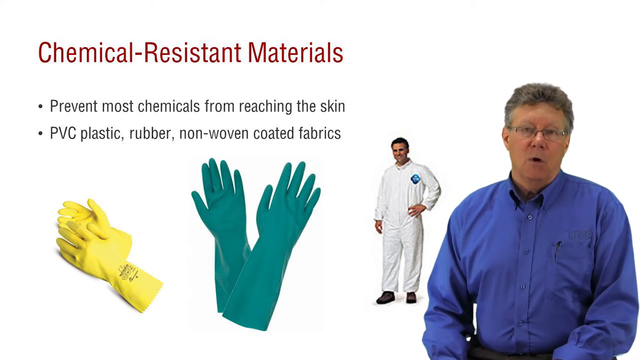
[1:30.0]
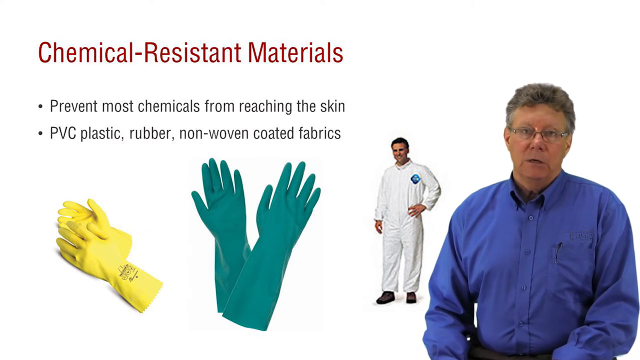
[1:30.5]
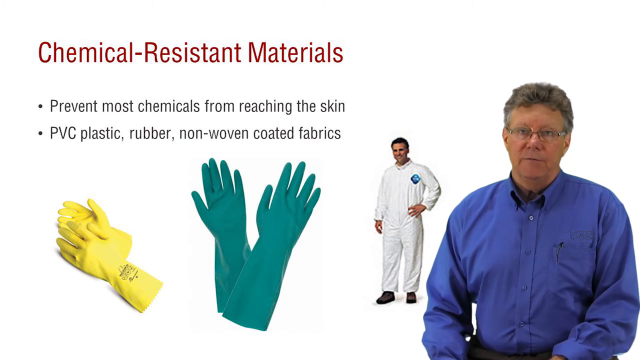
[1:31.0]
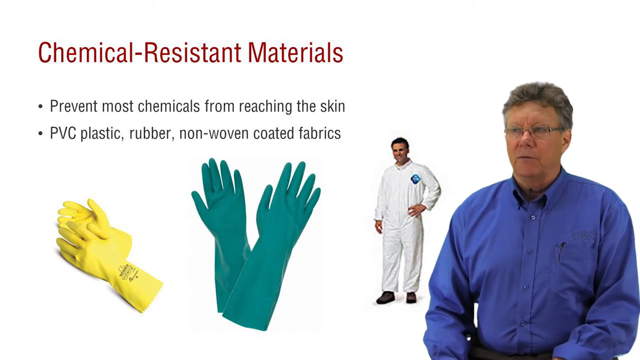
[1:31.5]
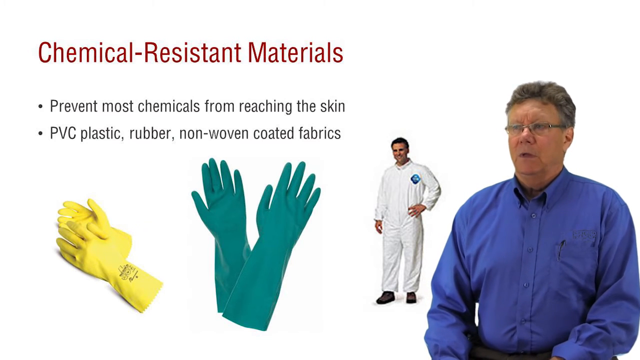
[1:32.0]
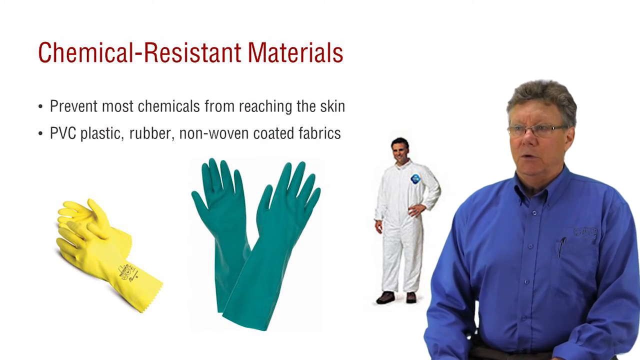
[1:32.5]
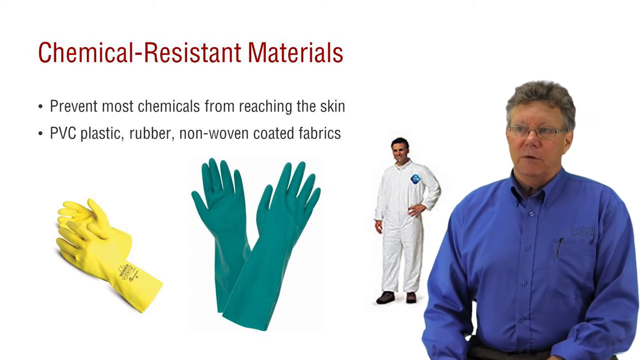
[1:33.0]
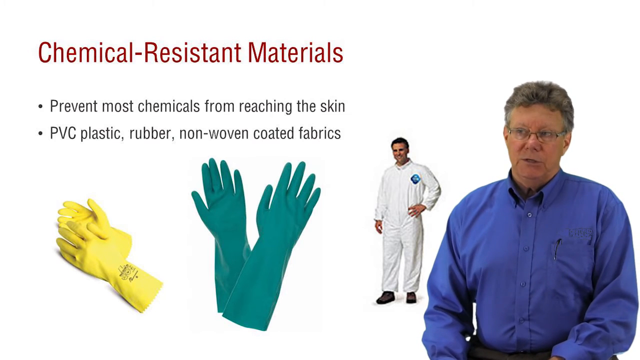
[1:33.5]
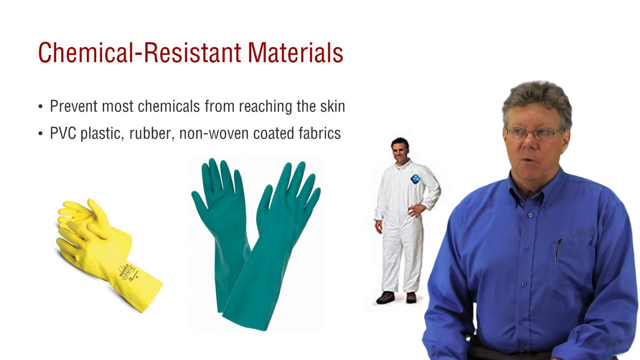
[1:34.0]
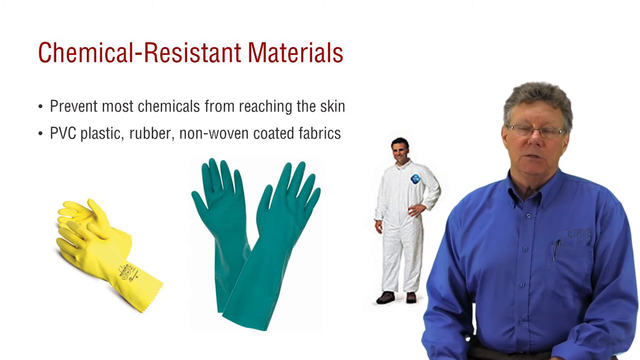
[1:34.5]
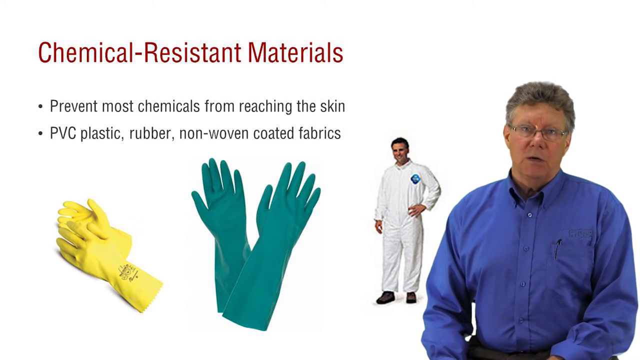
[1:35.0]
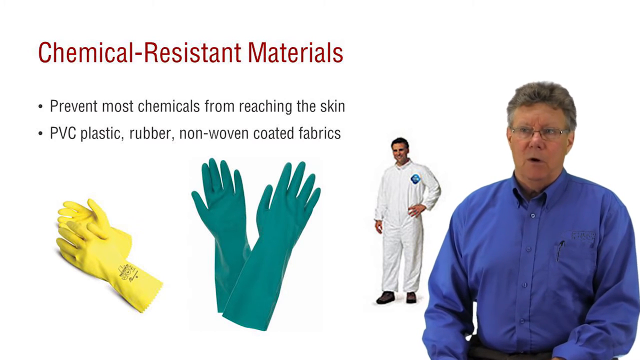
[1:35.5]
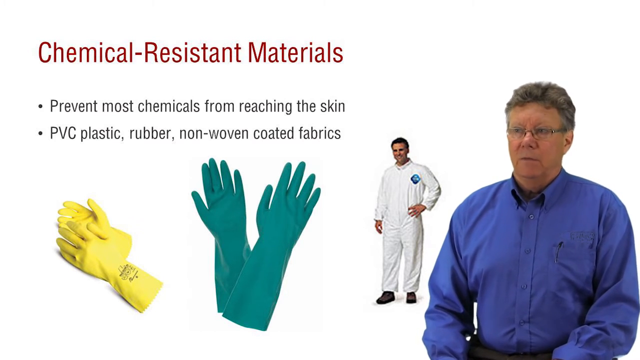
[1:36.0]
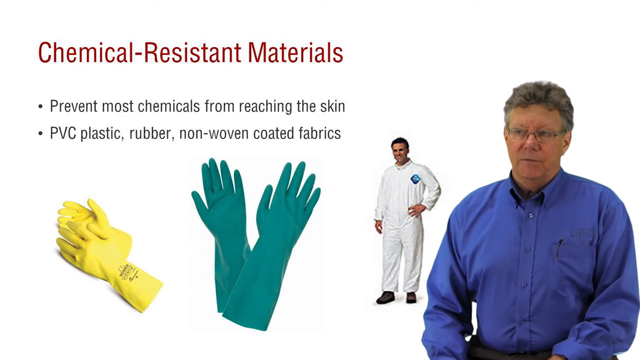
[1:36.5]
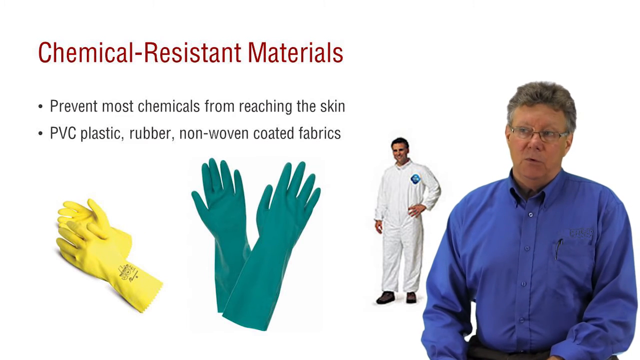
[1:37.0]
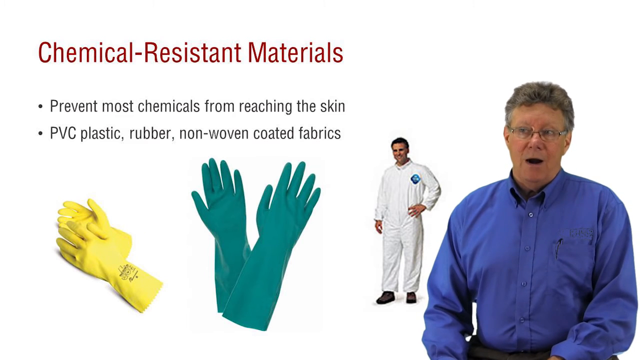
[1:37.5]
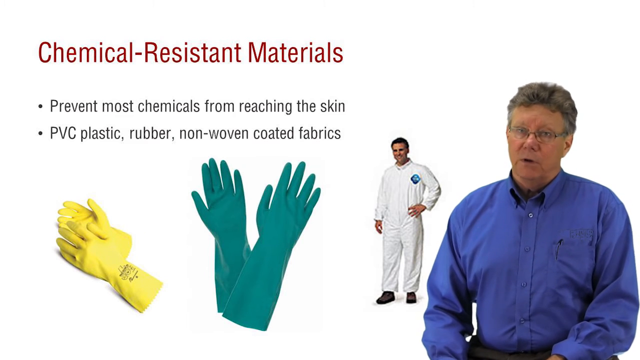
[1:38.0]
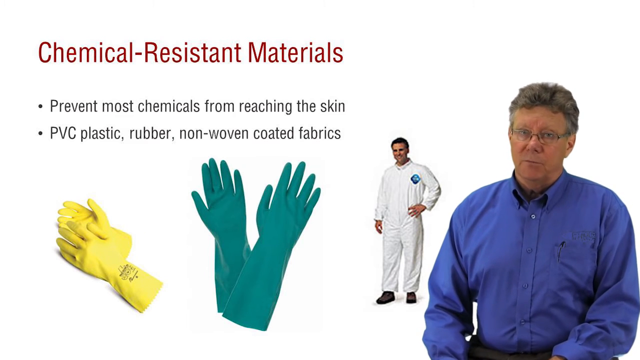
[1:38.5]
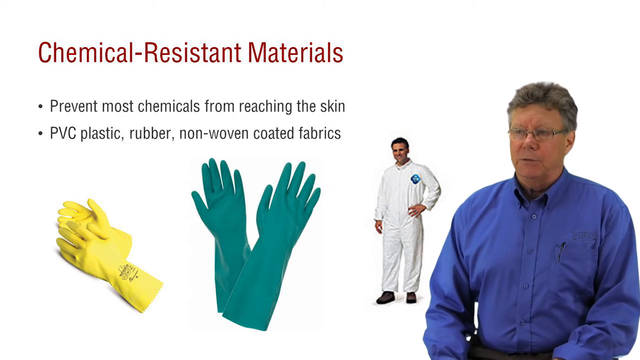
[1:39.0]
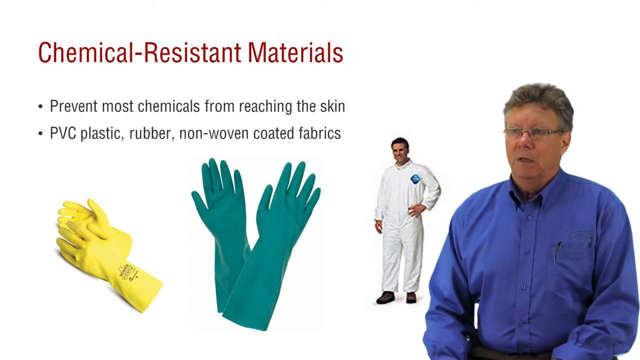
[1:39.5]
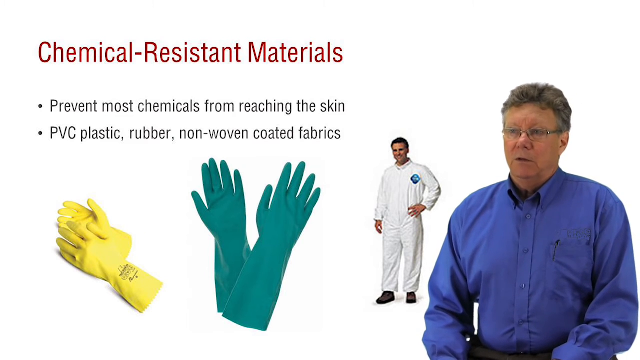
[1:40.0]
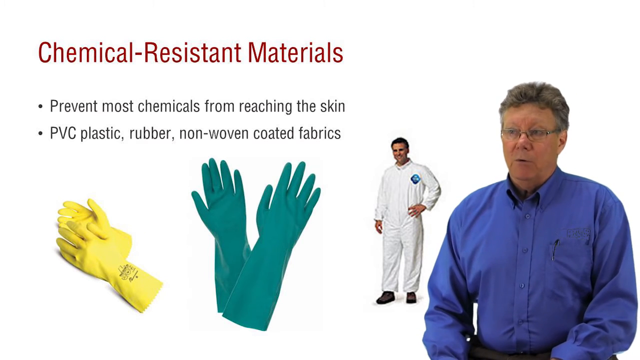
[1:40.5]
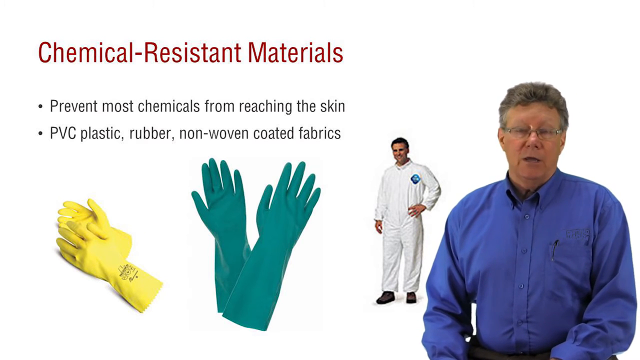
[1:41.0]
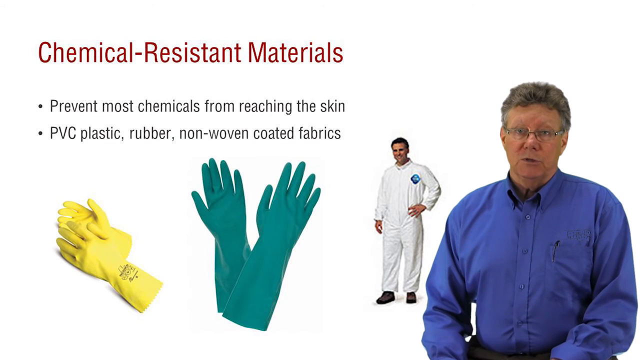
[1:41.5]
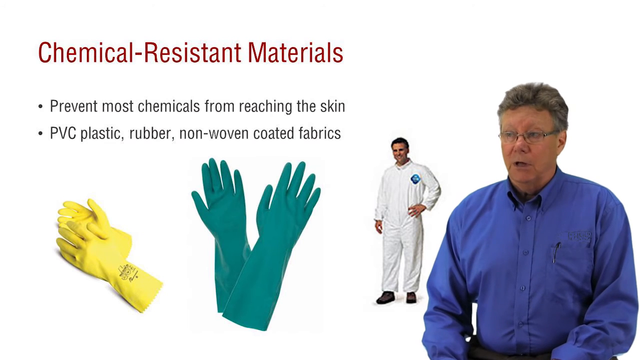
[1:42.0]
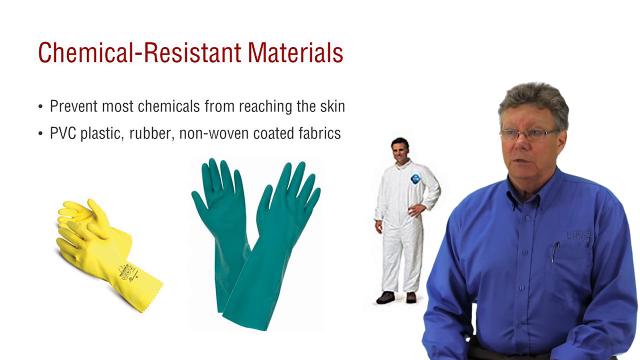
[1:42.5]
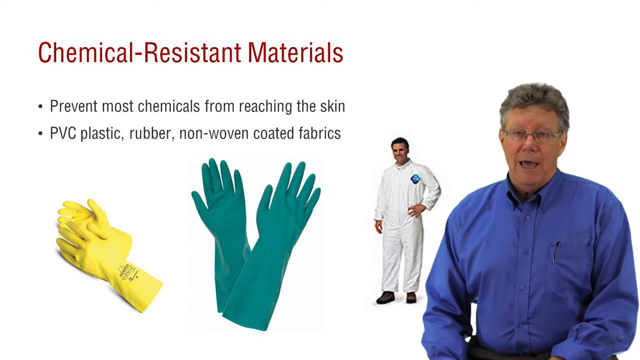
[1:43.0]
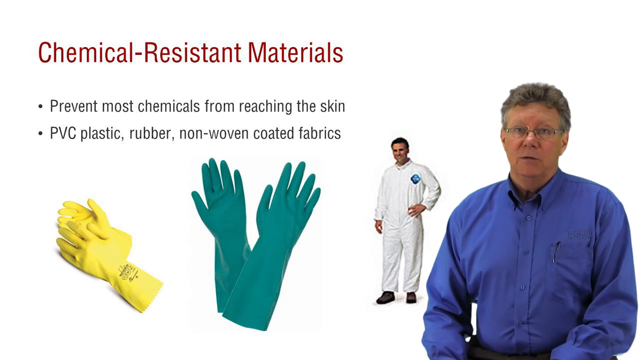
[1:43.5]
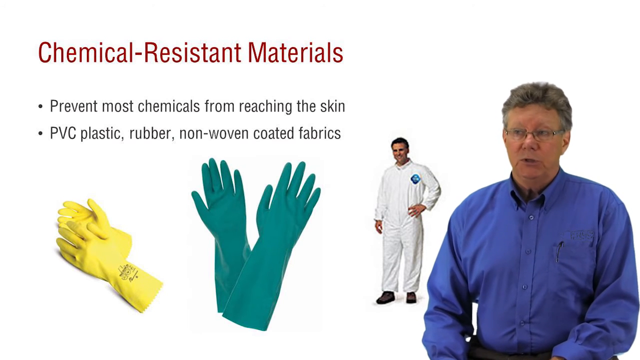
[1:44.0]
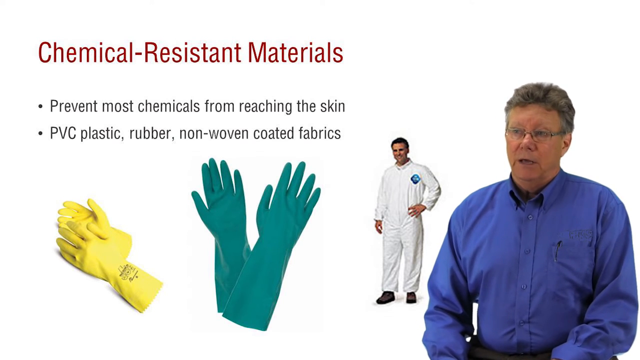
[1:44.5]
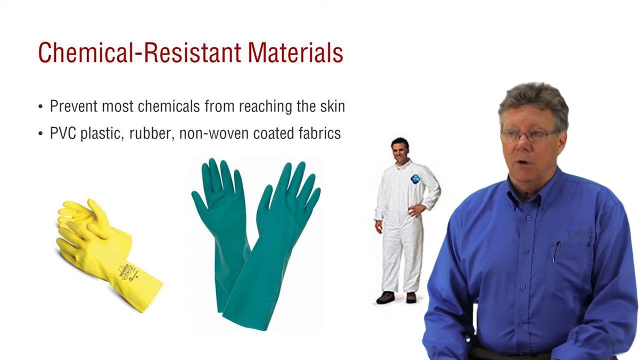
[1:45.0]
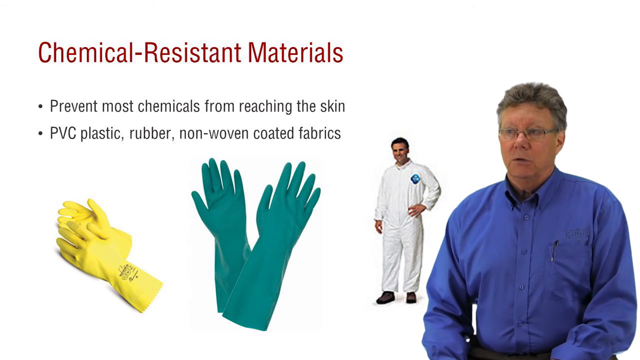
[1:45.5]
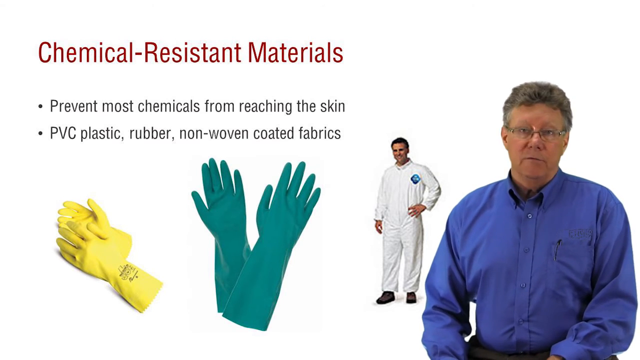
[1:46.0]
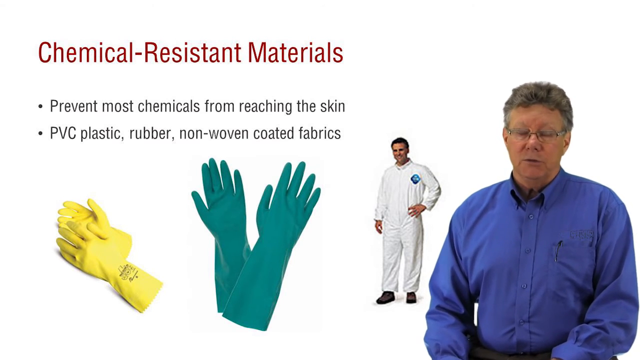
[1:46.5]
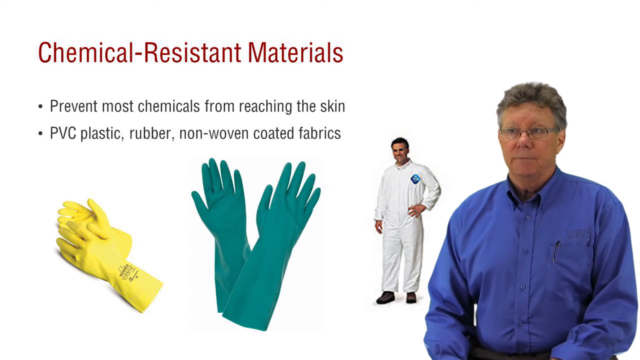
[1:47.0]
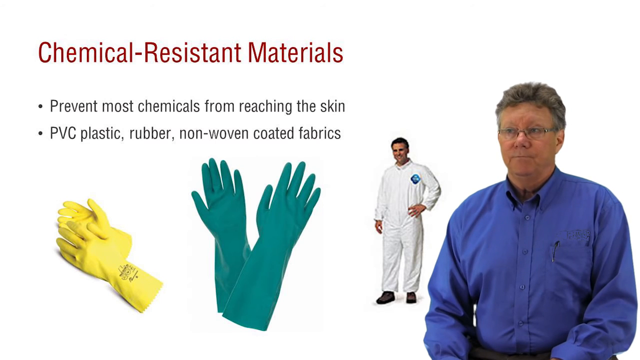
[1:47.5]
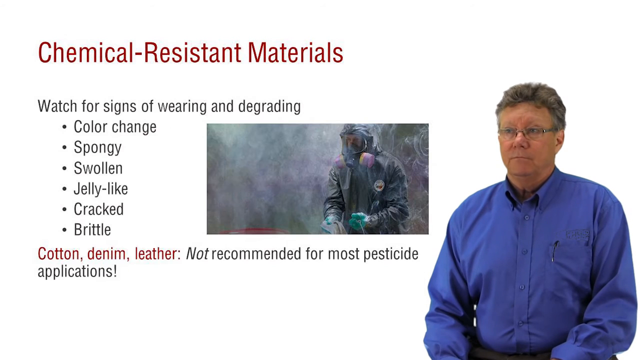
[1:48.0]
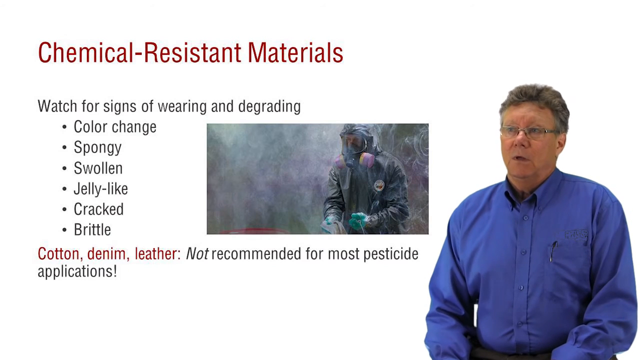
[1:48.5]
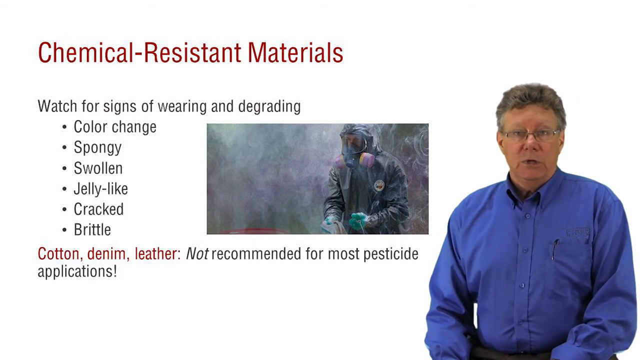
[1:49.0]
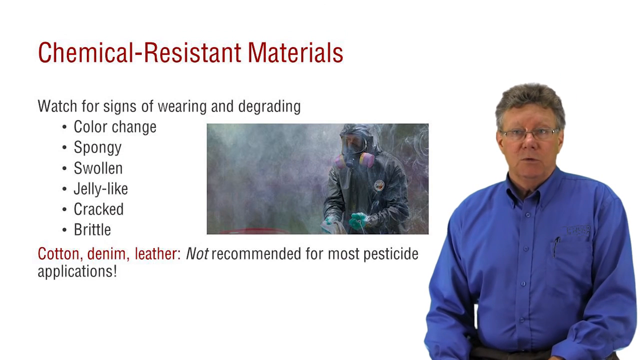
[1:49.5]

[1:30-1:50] Compliant equipment for handling these materials is shown: a short pair of yellow gloves with some writing on them, long green gloves, and a man wearing a white long-sleeve one-piece outfit with blue in the corner and black sneakers. To the right, a man in a blue button-down shirt, with a pen in his pocket, clear glasses and gray hair, is speaking. Text reads "prevent most chemical from reaching the skin" and "PVC plastic rubber non-woven gloves and coated fabrics." The video then shows a person wearing a gas mask, a long outfit and gloves, with text reading "chemical resistant materials. Watch for signs of wearing and degrading. Color change, spongy, swollen, jelly-like, cracked, brittle" and "cotton, denim, leather, not recommended for most pesticide applications." It then goes back to the gloves and the man in the one-piece outfit.